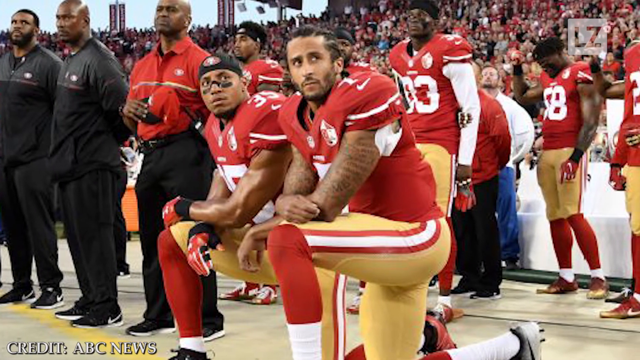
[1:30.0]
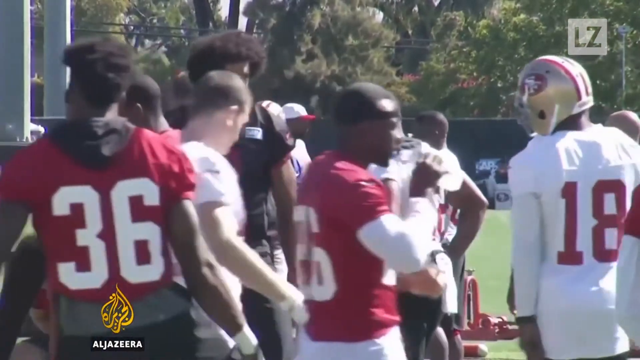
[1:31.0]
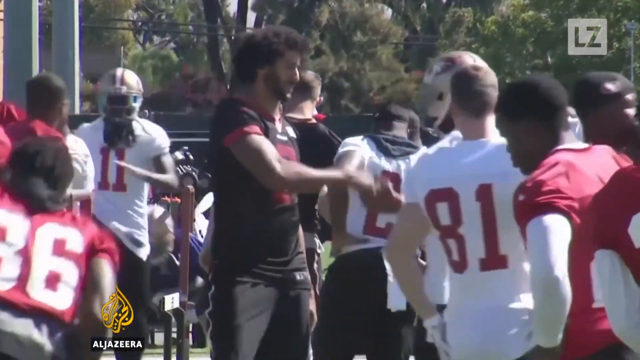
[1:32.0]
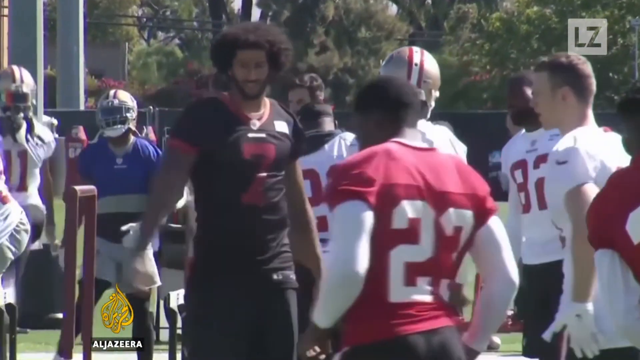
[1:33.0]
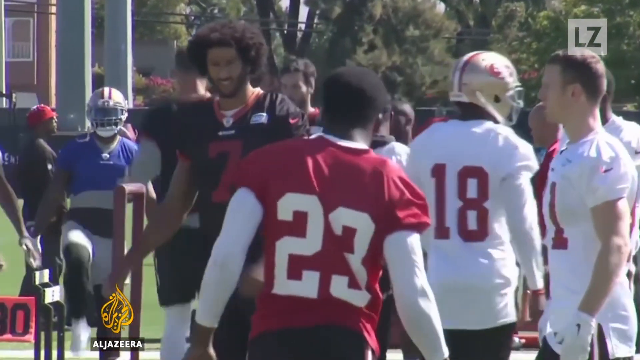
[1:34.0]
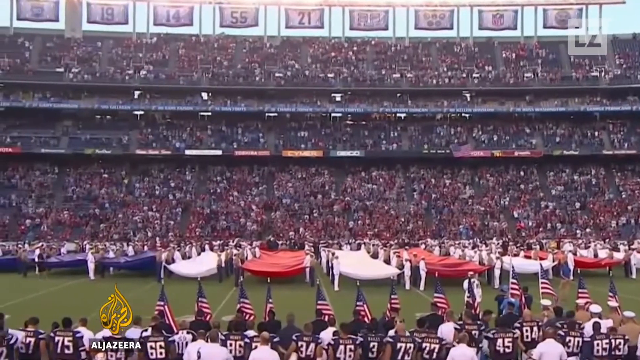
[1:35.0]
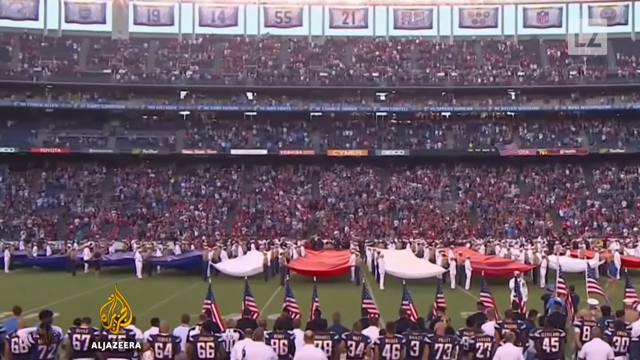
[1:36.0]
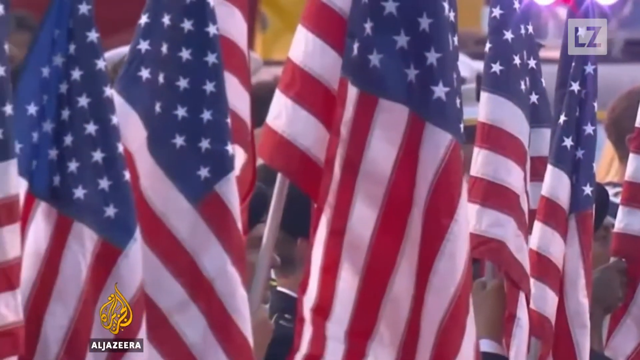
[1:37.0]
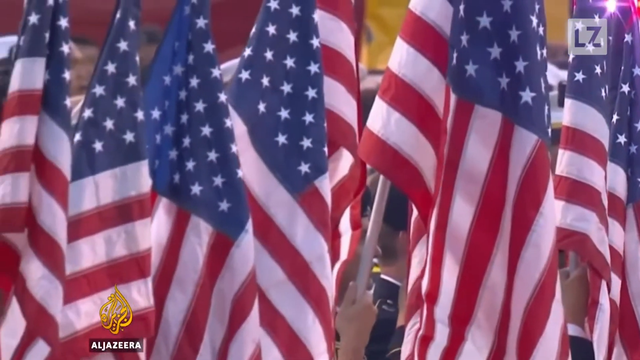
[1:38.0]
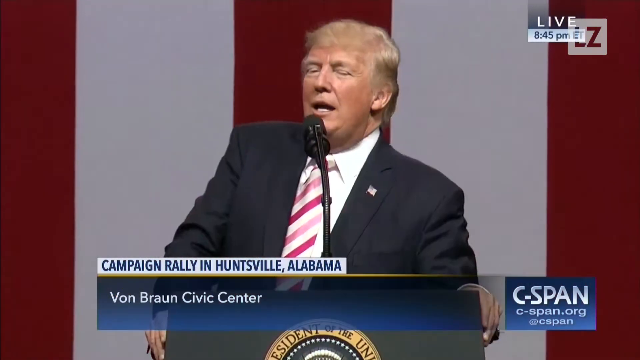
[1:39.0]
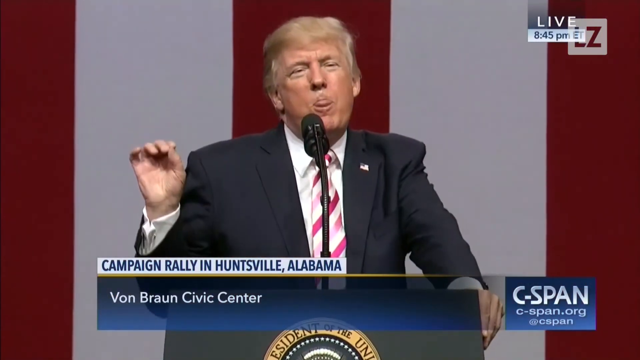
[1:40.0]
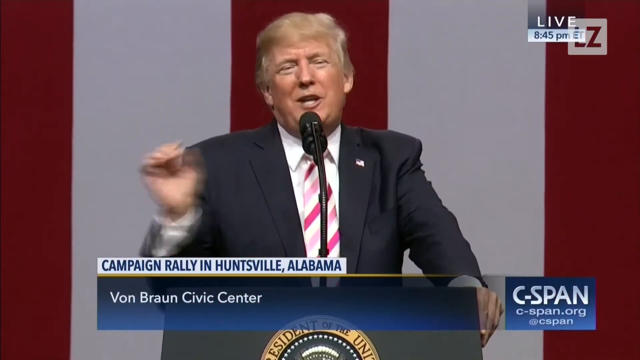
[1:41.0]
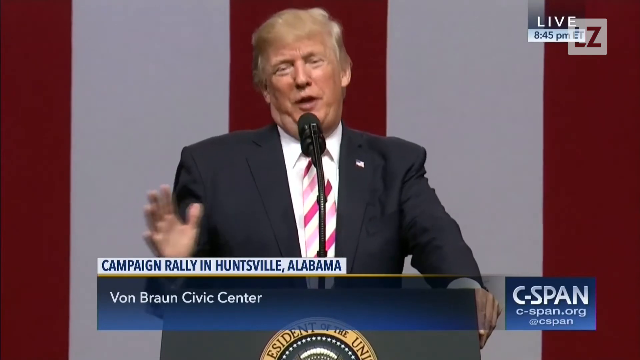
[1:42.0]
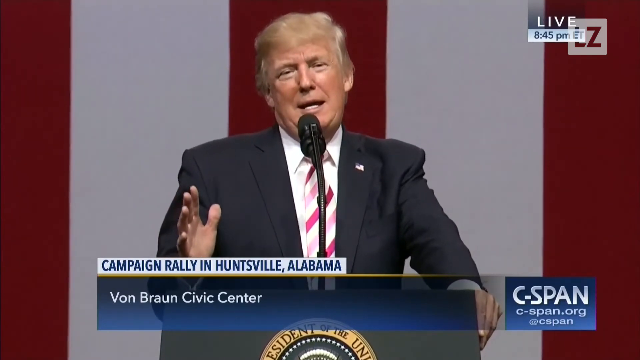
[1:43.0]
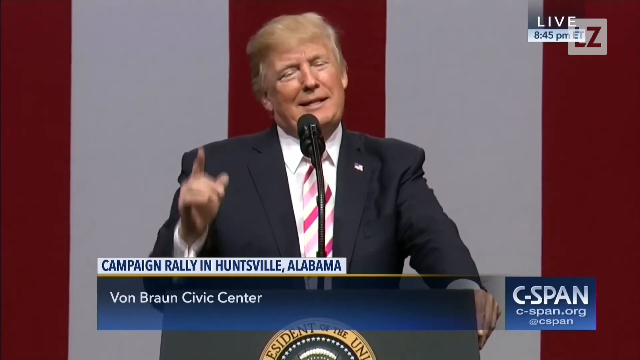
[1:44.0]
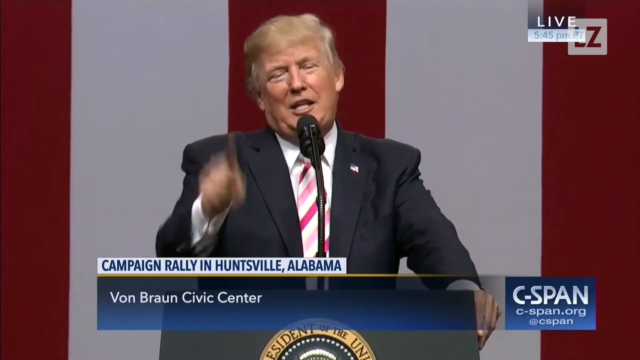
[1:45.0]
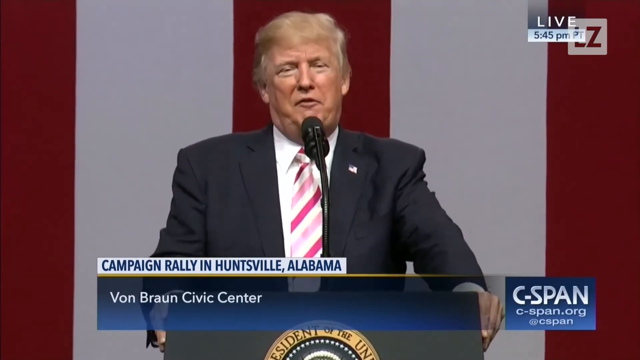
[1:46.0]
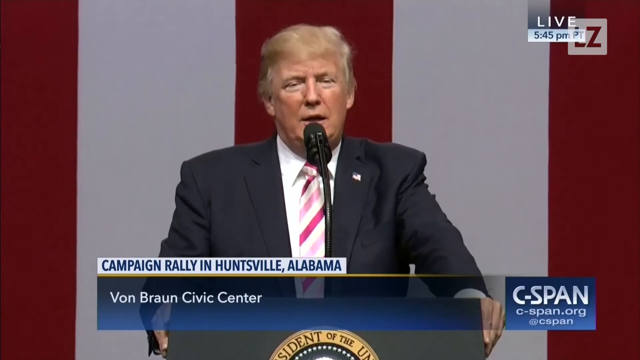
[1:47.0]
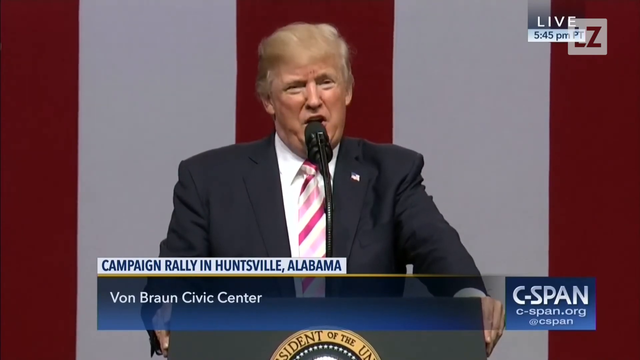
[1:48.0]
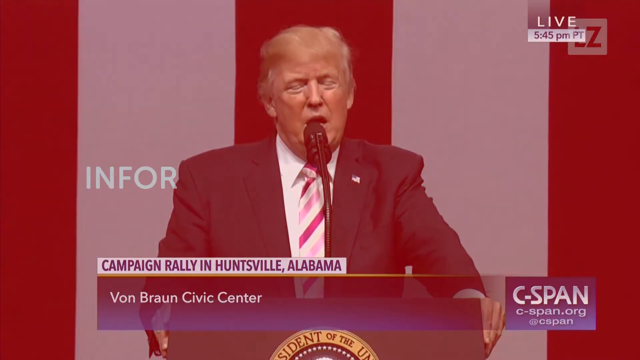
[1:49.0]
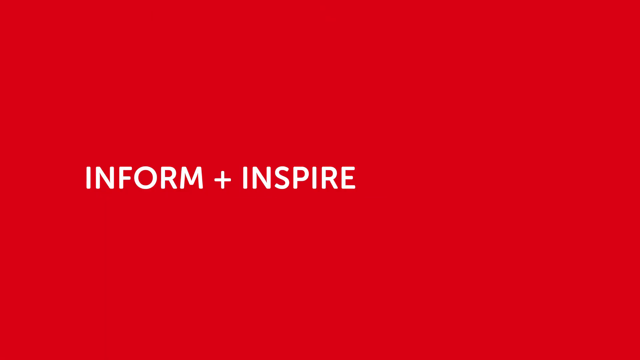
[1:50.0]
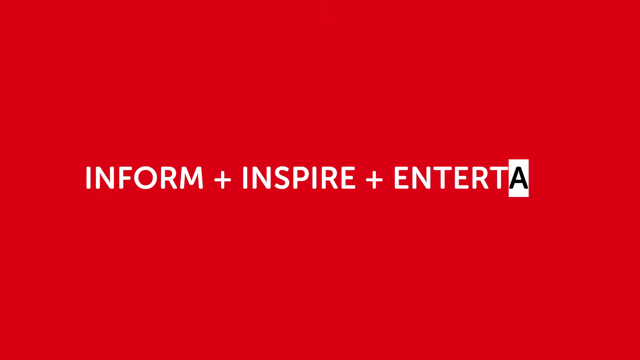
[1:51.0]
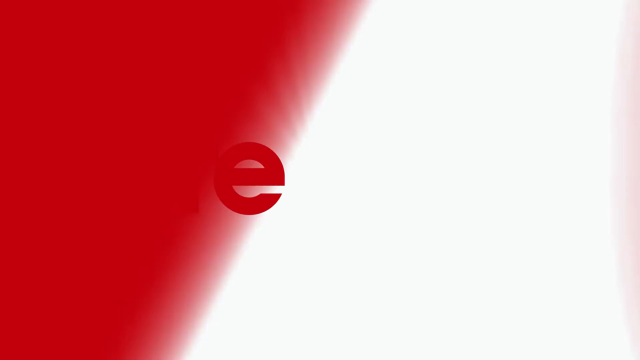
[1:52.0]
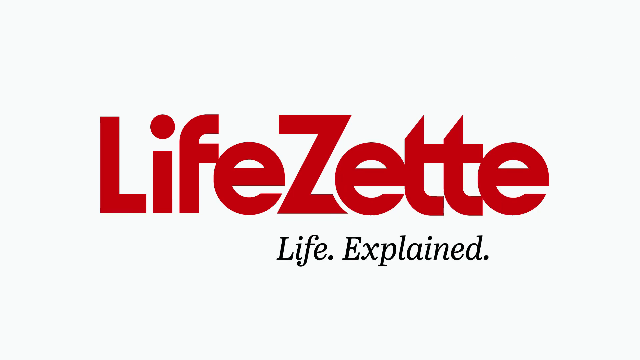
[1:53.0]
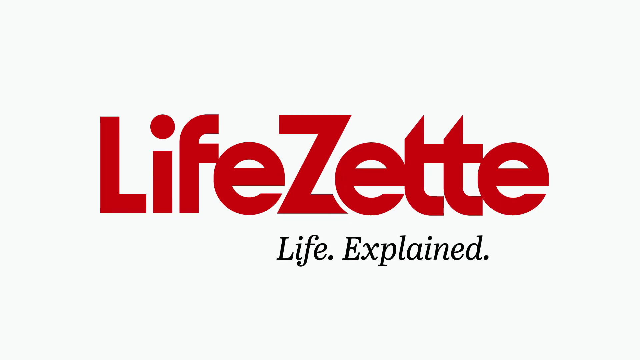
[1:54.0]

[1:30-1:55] A page pops up with text in which "LIFE SET" is written in bold red letters, with a second line beginning "LIFE" in small but visible letters. The page also shows the picture of Colin with his afro hair. The magazine page reads "GQ" in grey and shows his face as he faces the camera. He has a brown beard and a light complexion, and wears a black jacket, a black polo neck and a necklace. The cover reads "CITIZEN OF THE YEAR COLIN KAEPERNICK" in pink. He looks to be in his late 40s and has small brown eyes. Next, many flags are on the ground, and Trump is speaking at a podium, holding it, at a campaign rally in Huntsville, Alabama.